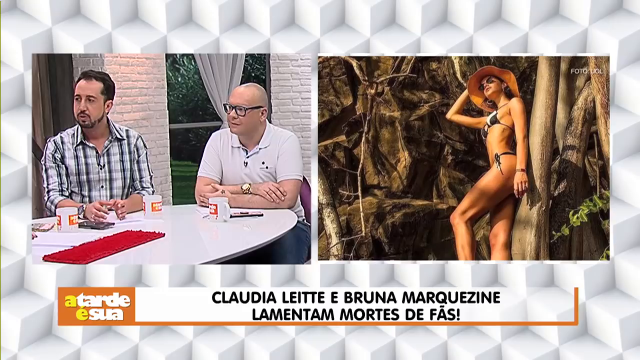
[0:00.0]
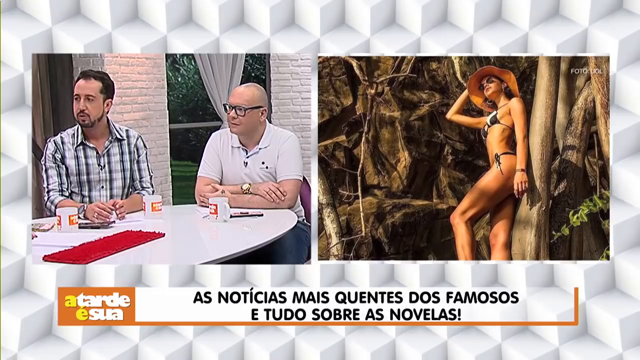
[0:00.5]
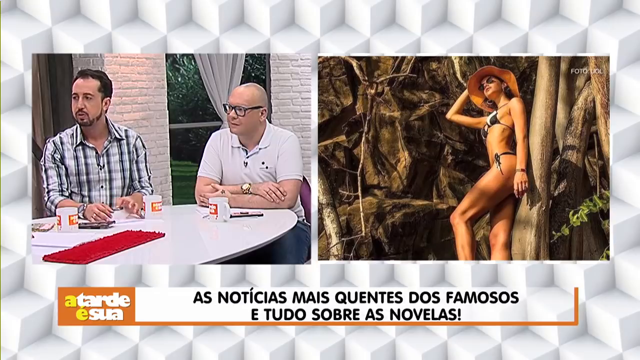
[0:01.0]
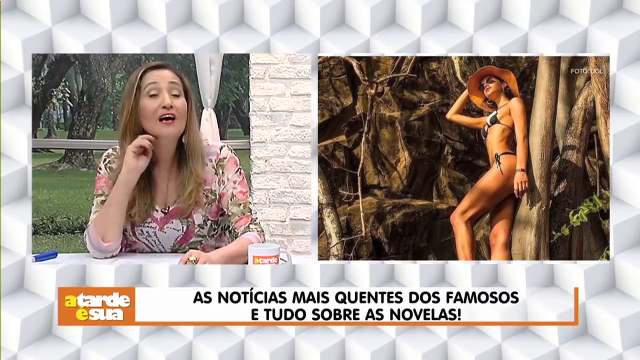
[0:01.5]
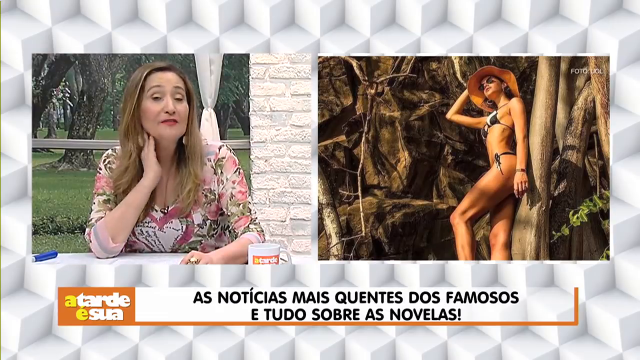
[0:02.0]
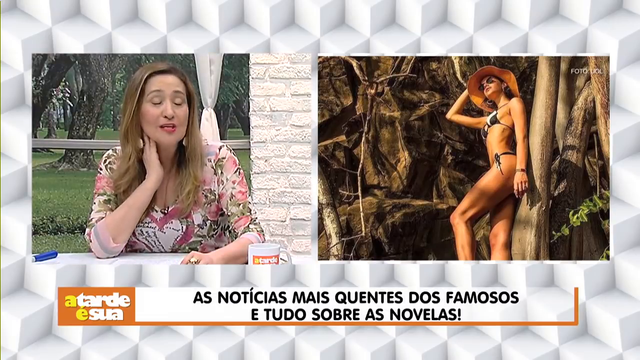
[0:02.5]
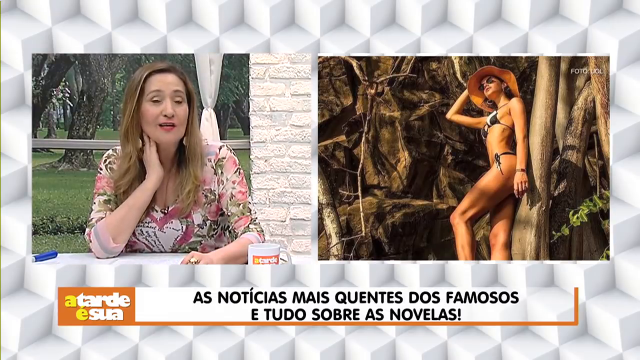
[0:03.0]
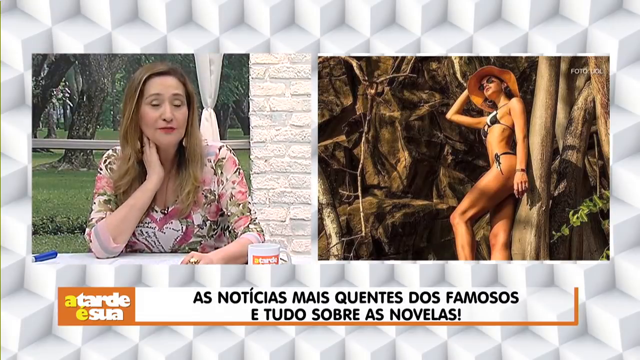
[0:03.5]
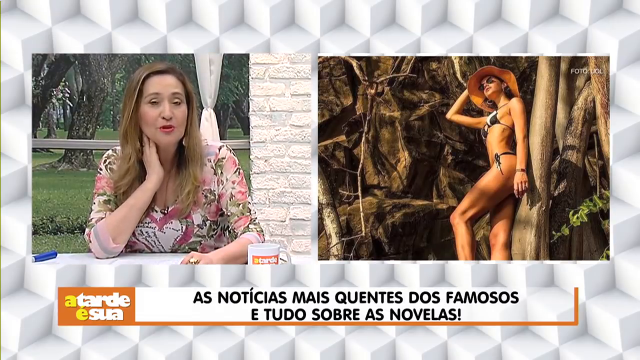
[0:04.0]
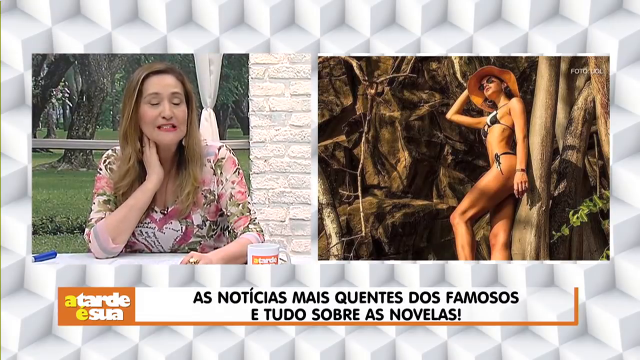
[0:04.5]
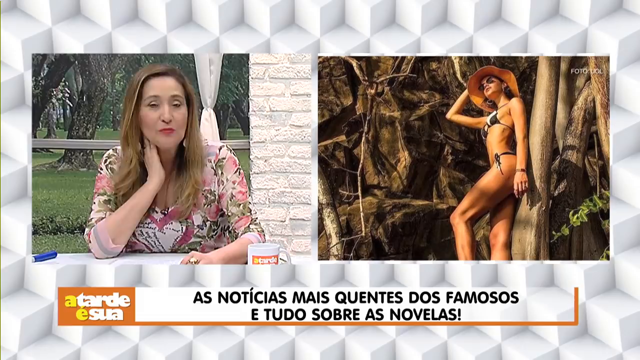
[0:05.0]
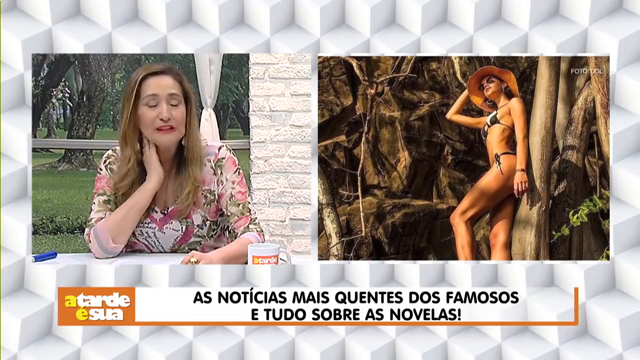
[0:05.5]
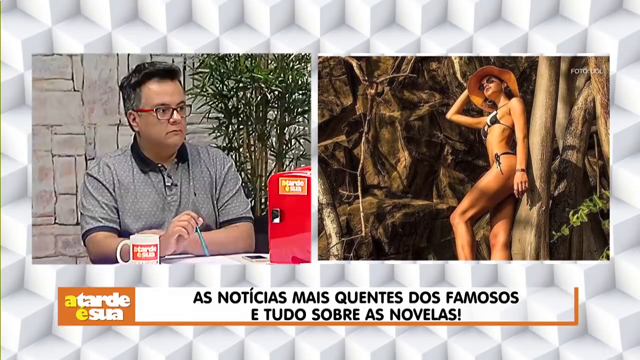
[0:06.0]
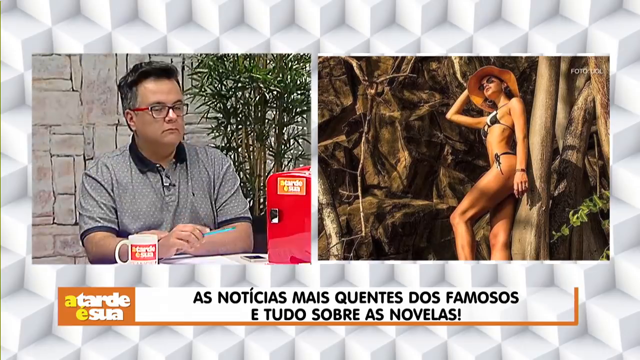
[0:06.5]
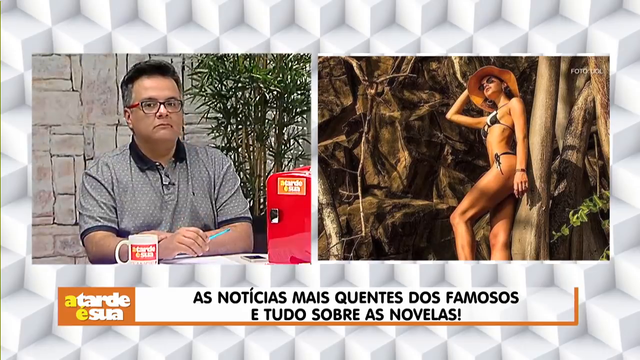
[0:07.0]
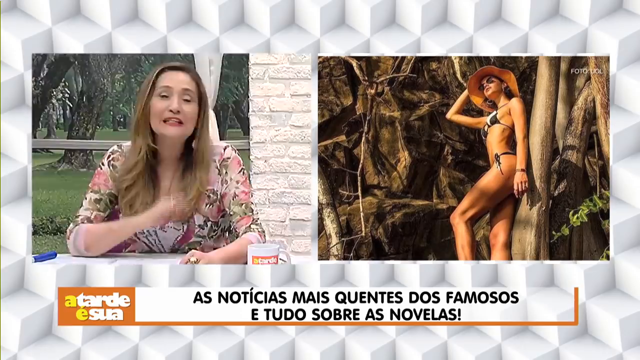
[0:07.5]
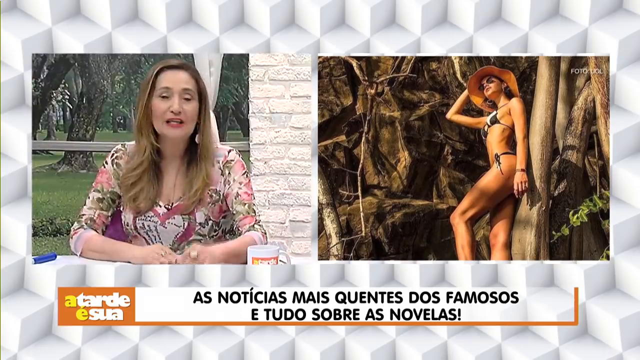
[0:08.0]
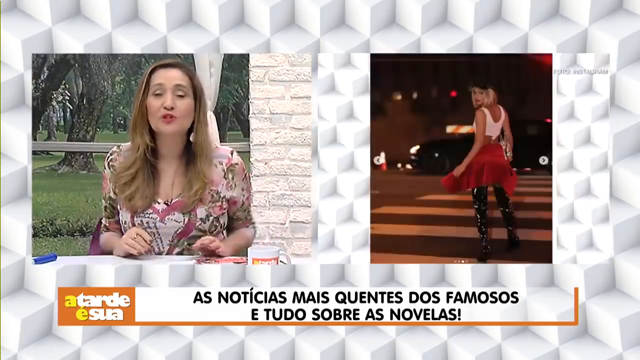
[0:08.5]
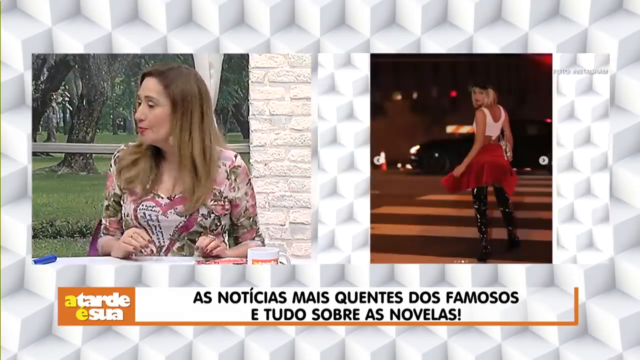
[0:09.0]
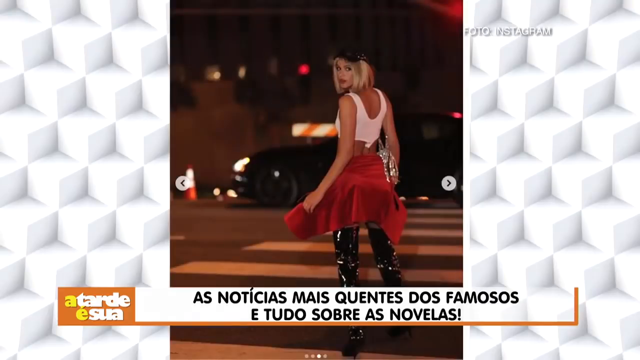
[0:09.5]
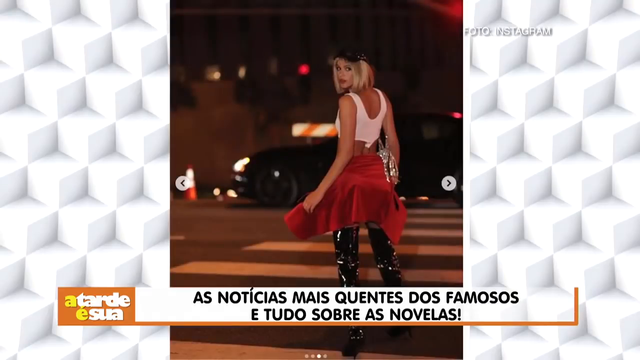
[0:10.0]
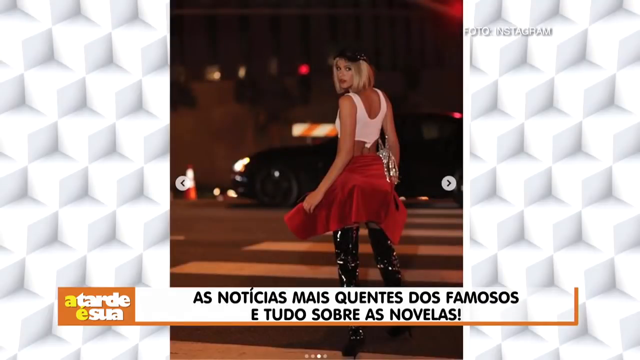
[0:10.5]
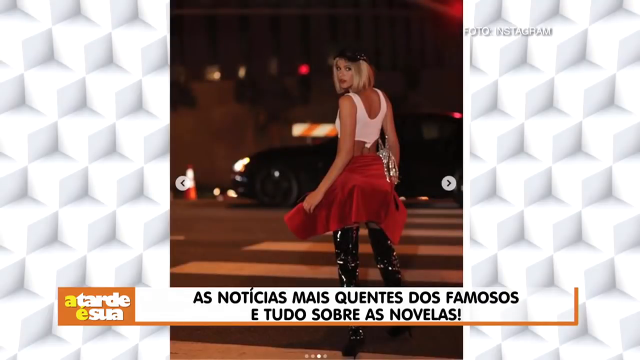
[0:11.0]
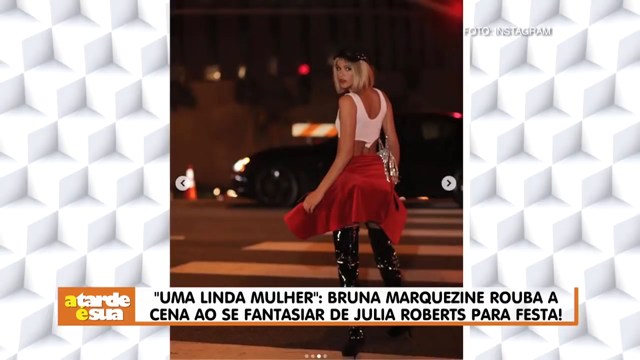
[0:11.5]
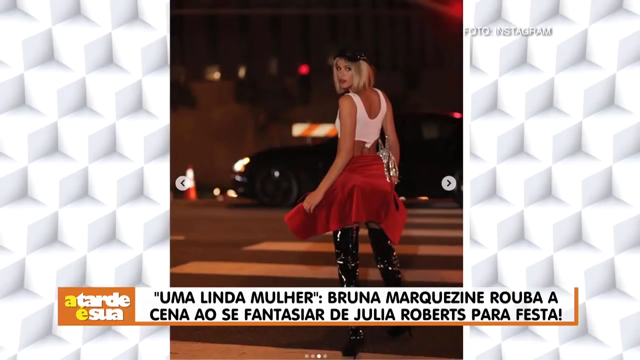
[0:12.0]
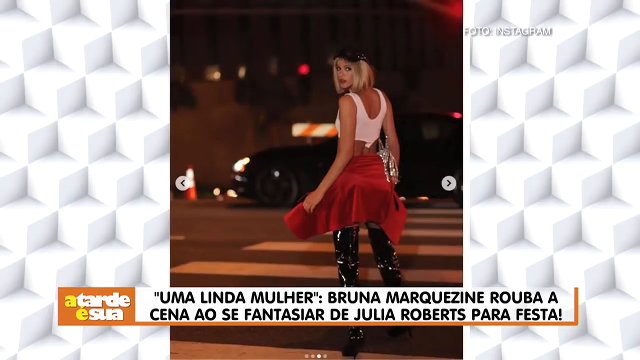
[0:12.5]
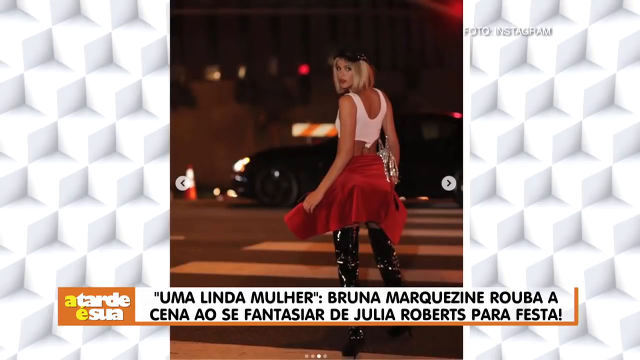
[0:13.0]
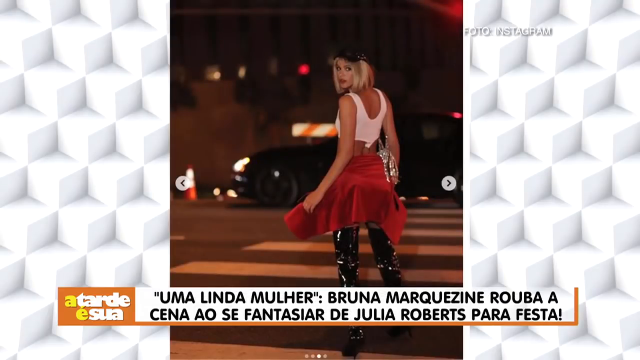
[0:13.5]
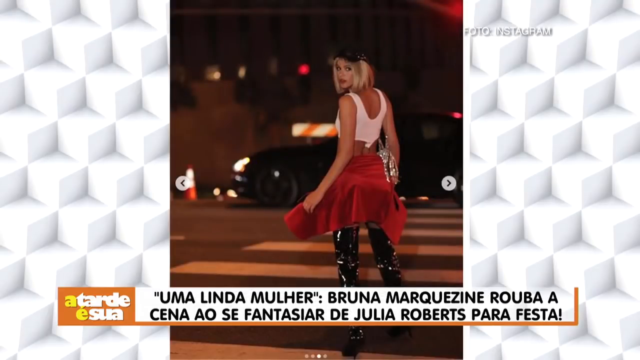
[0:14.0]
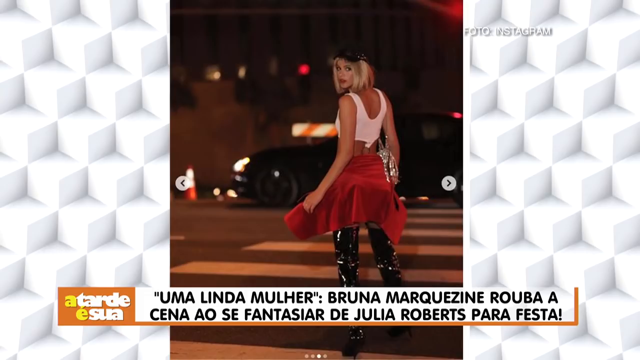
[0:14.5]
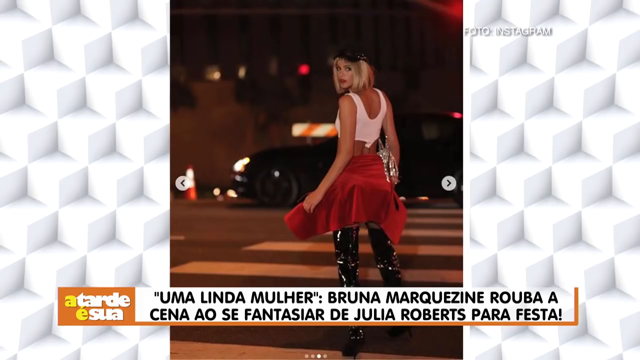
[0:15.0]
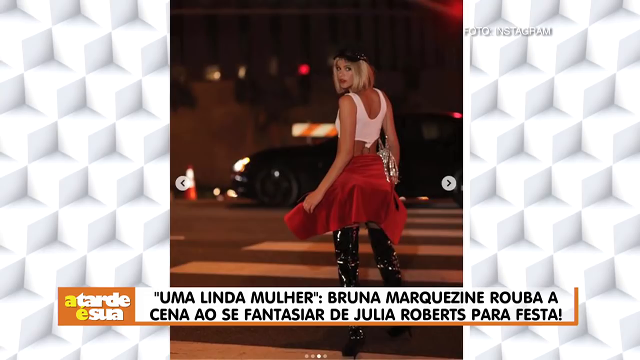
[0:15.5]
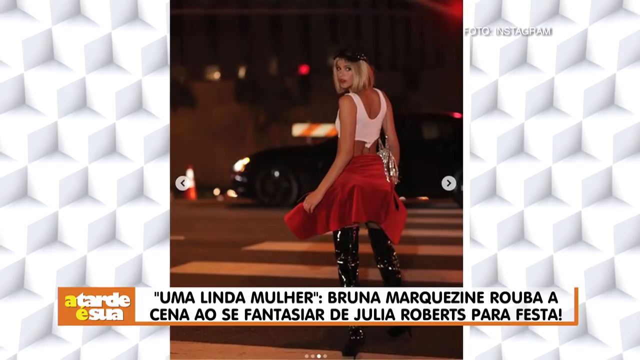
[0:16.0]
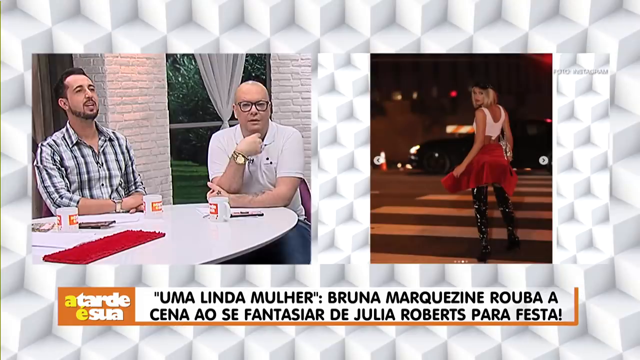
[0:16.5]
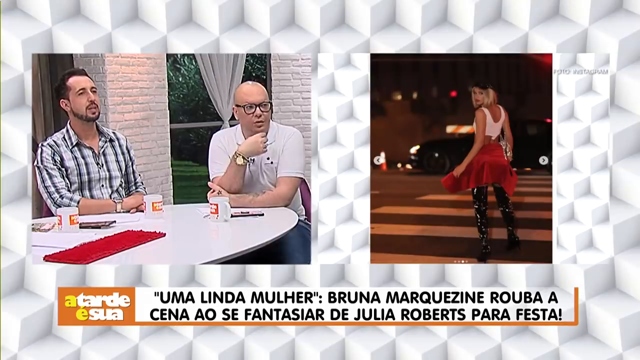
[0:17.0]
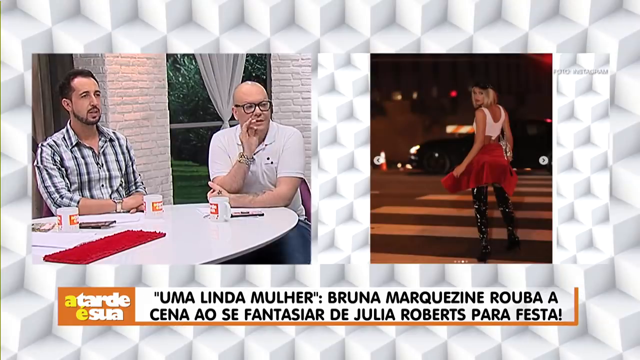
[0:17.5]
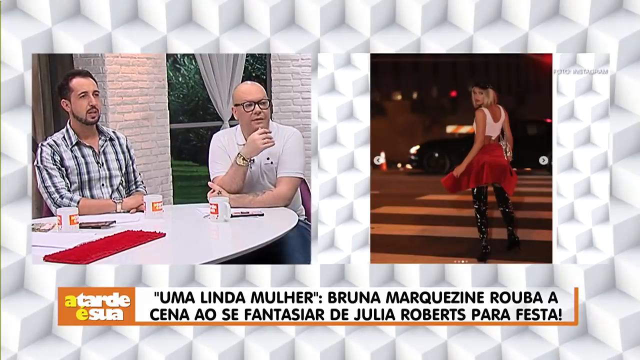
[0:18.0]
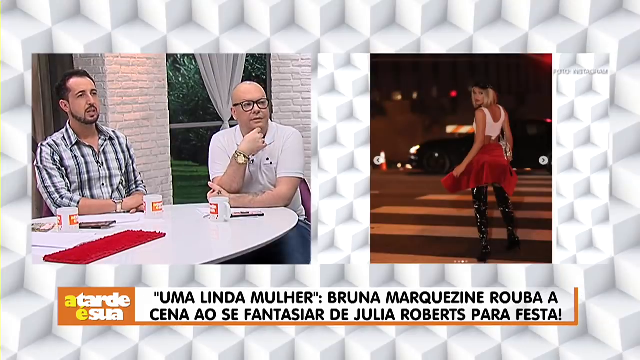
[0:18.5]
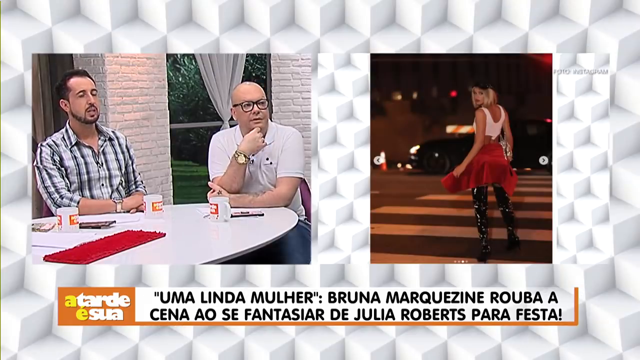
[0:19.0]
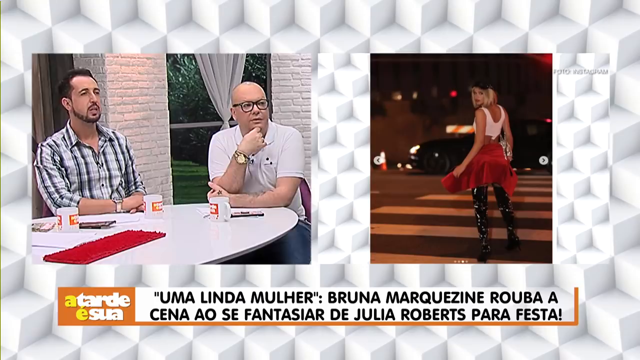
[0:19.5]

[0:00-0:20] The video looks like it might be a talk show. On the left, two older men are shown: one is bald, wearing glasses, a white shirt and a glass watch; the other has dark black hair, a button-up striped-looking shirt and a very thin beard and mustache. There is a red thing on the table, possibly a keyboard, and they appear to have coffee cups in front of them, with possibly some cell phones. To the right is a picture of a woman in a two-piece bathing suit and a sun hat, up against some rocks or trees, with text at the bottom beginning "Claudia Marquezine". An older woman in a floral print dress with brownish-reddish hair appears on the left; she also has a coffee cup in front of her. A fourth man at the table wears a gray polo-style shirt with a black collar and black trim around the arms, glasses, and has dark black hair on the edges; there is something red in front of him, a ficus tree in the background, and a coffee cup as well. The shot on the right then changes to a woman who looks like Julia Roberts in Pretty Woman, with long black boots, a red shirt tied around the waist, a white midriff-baring shirt and a newsboy or page hat, standing in a walkway.